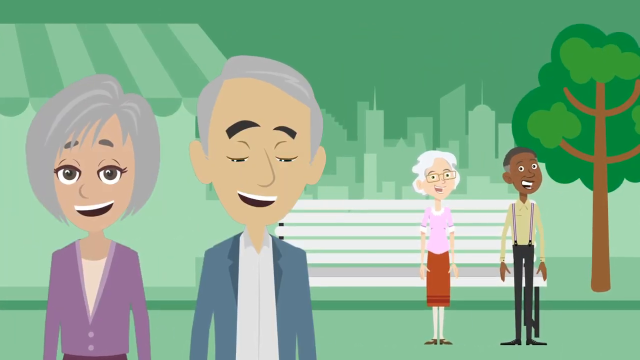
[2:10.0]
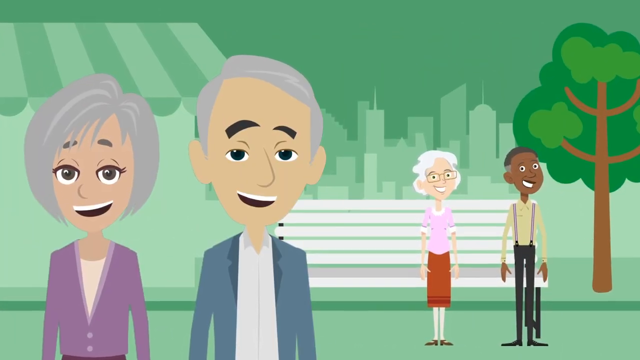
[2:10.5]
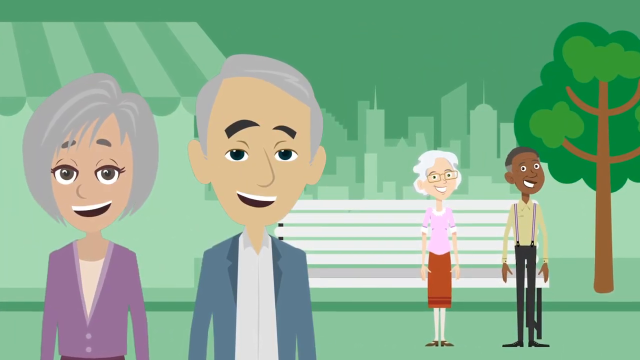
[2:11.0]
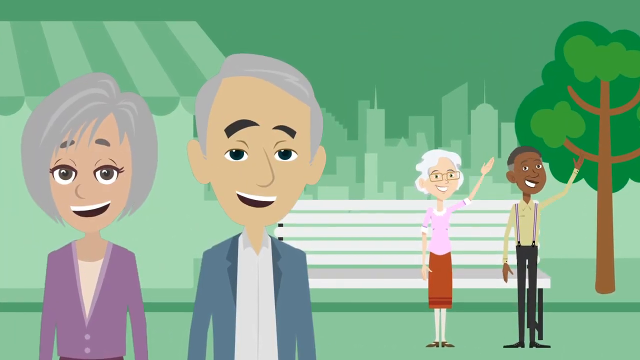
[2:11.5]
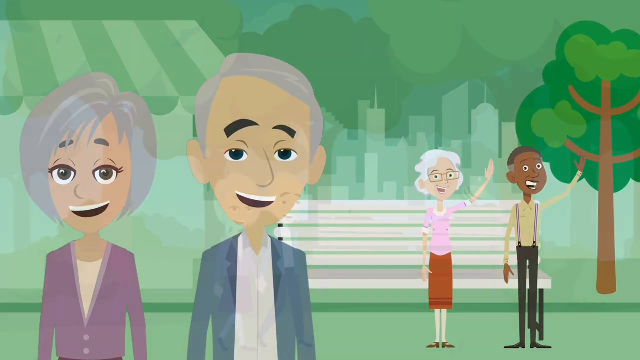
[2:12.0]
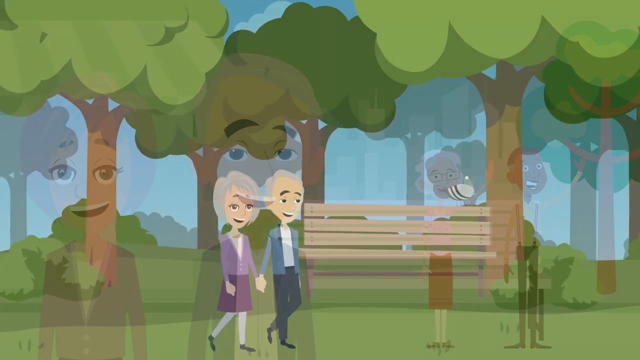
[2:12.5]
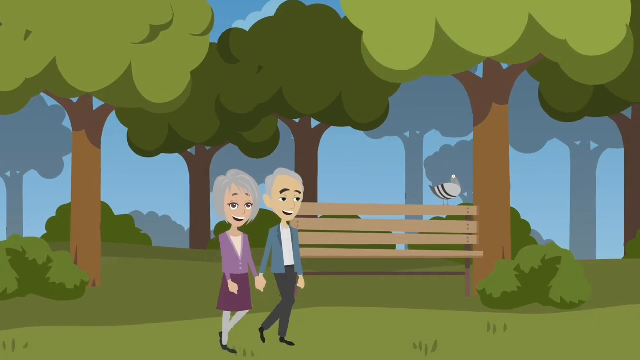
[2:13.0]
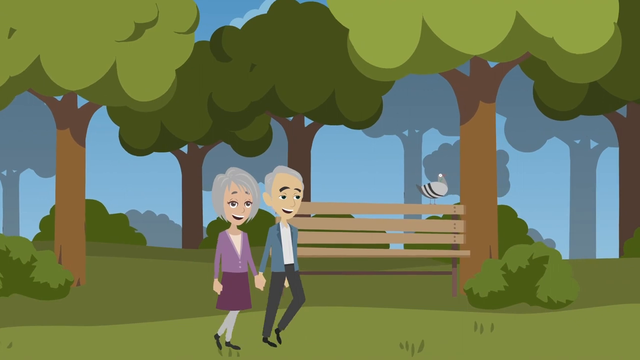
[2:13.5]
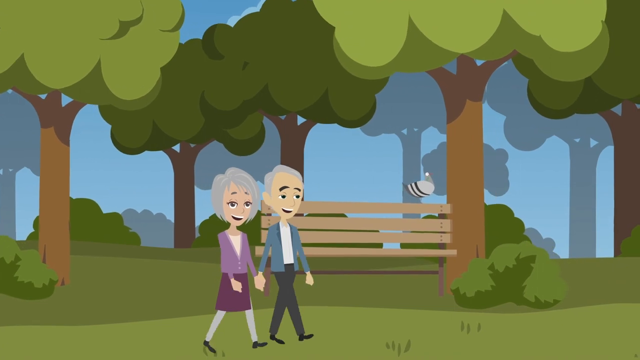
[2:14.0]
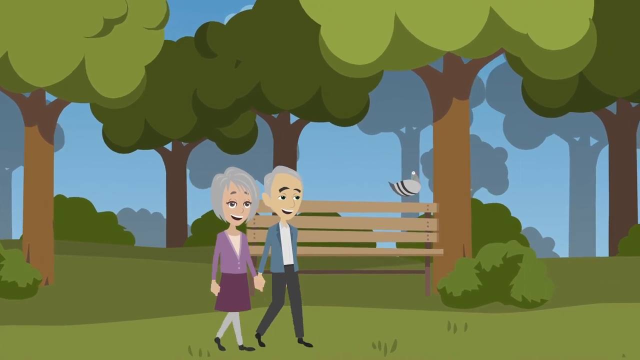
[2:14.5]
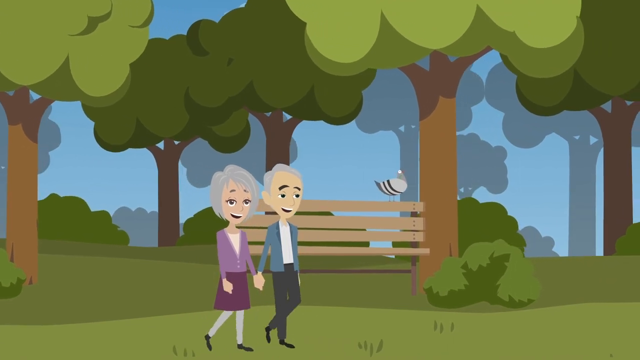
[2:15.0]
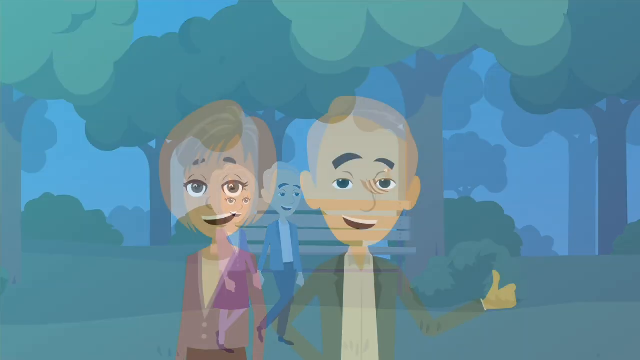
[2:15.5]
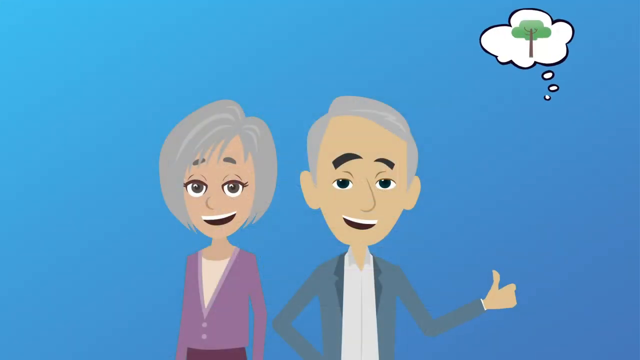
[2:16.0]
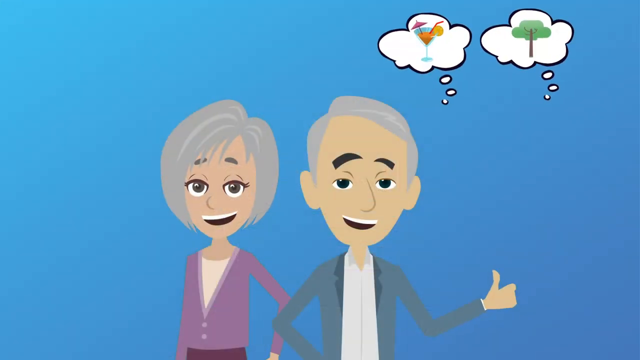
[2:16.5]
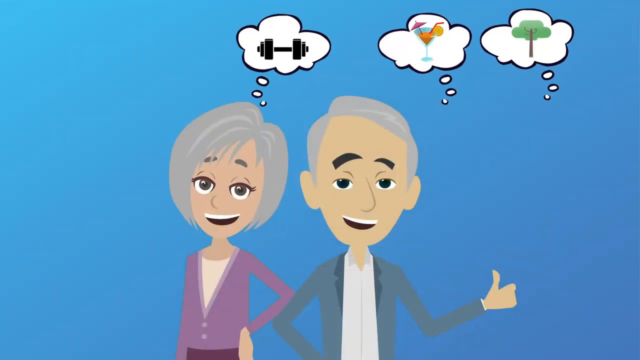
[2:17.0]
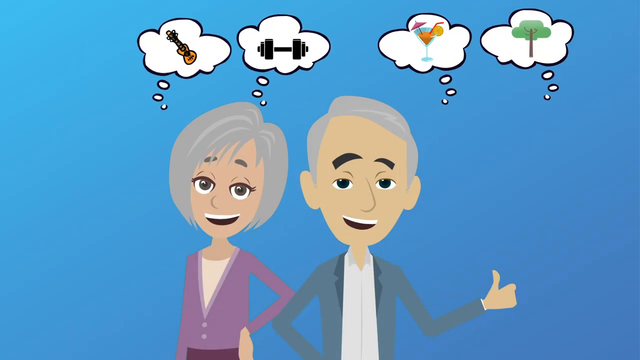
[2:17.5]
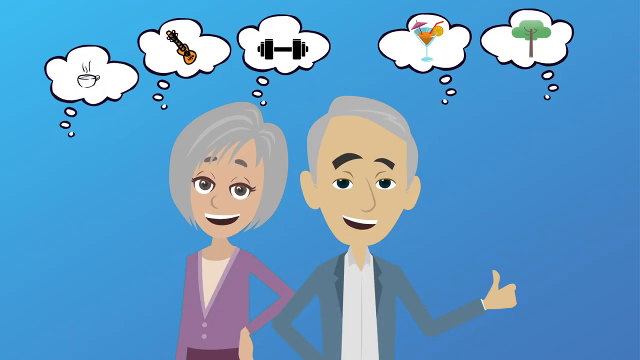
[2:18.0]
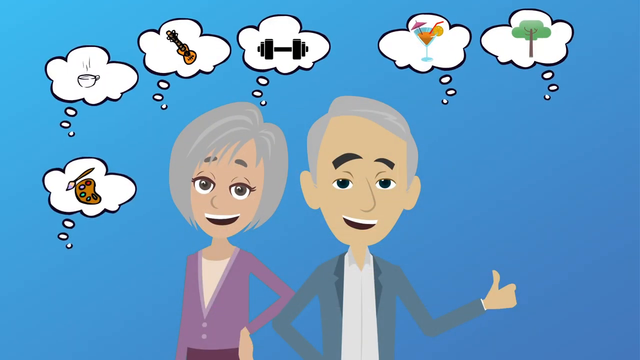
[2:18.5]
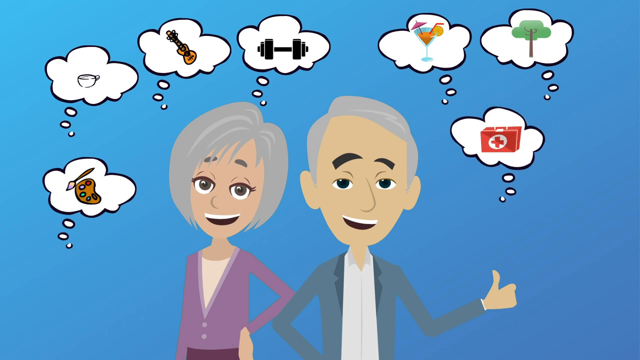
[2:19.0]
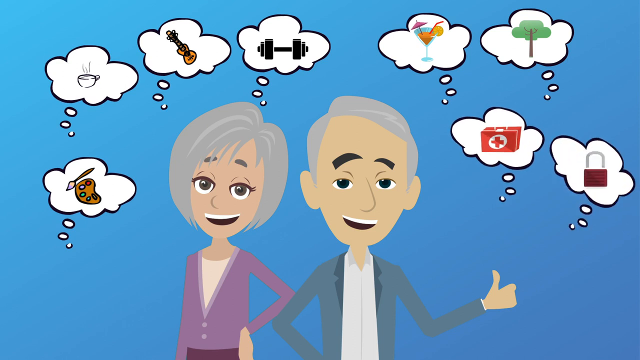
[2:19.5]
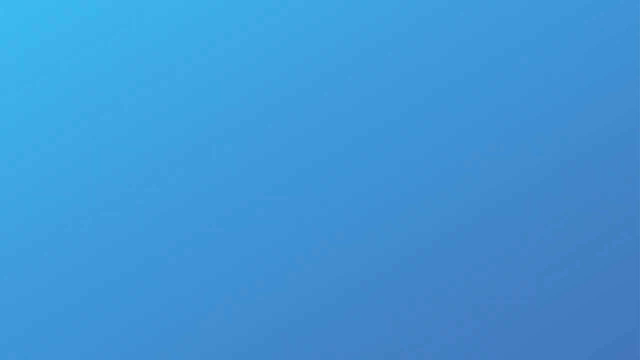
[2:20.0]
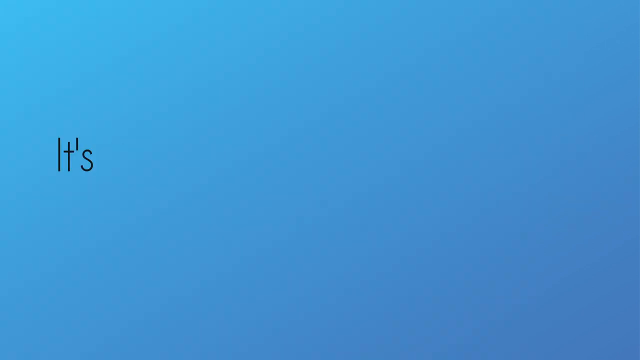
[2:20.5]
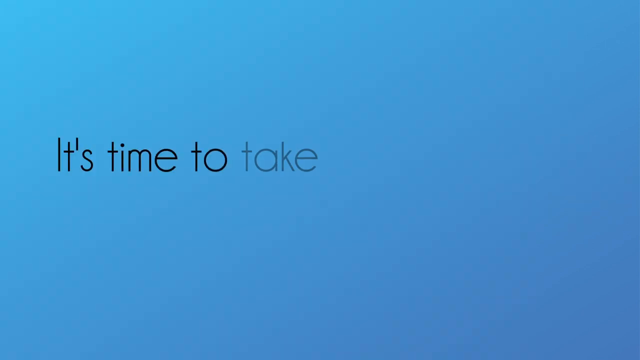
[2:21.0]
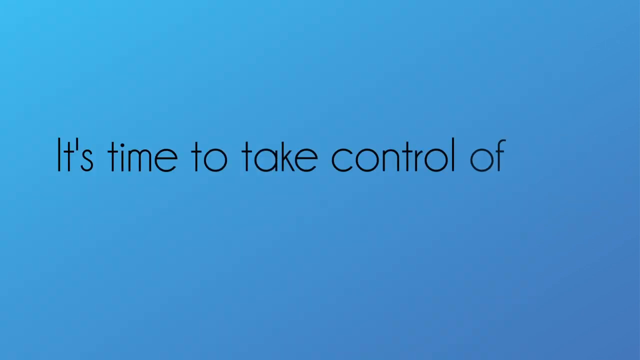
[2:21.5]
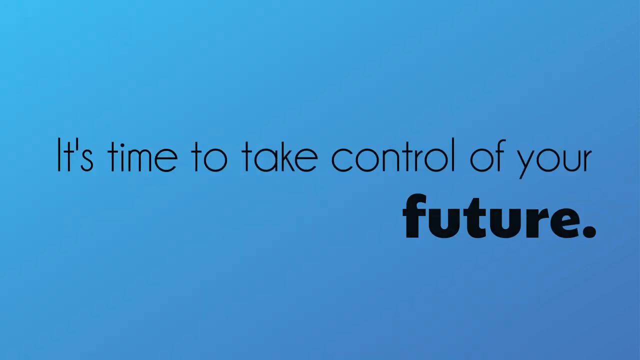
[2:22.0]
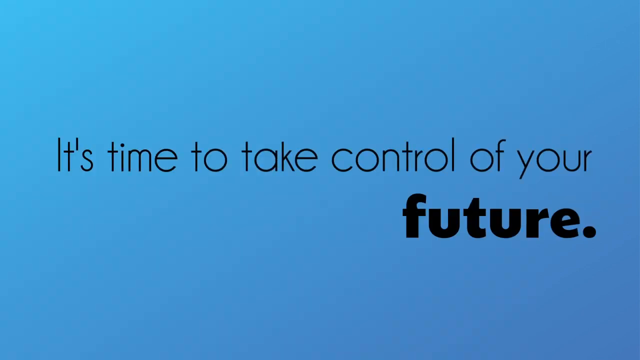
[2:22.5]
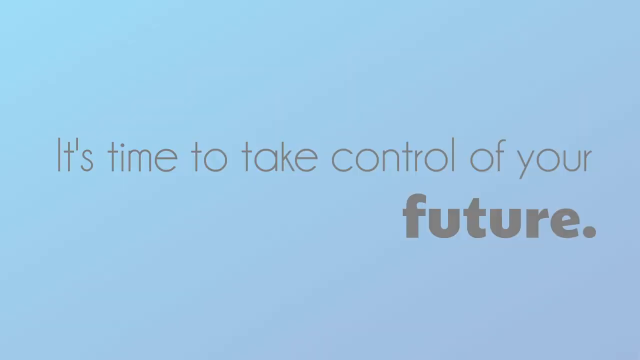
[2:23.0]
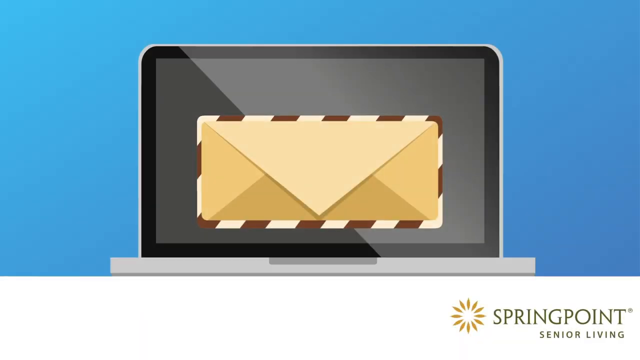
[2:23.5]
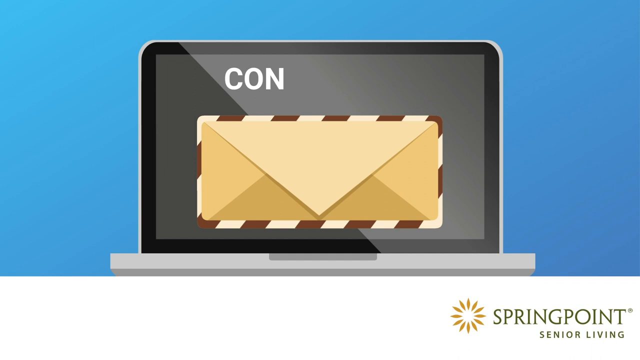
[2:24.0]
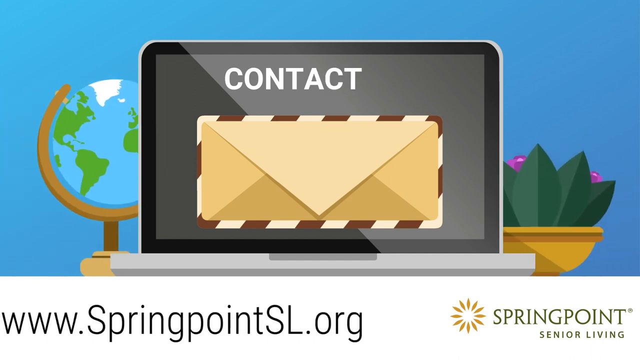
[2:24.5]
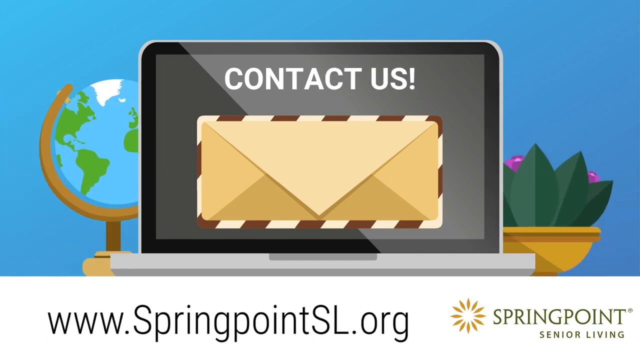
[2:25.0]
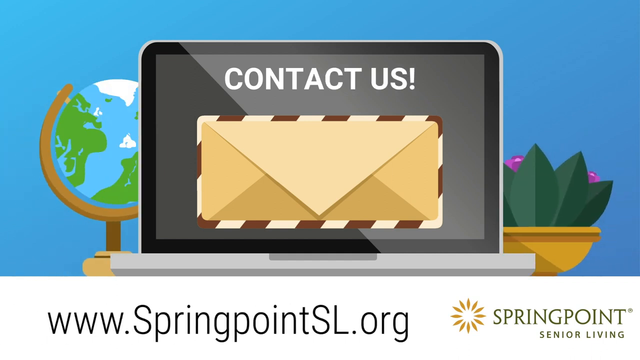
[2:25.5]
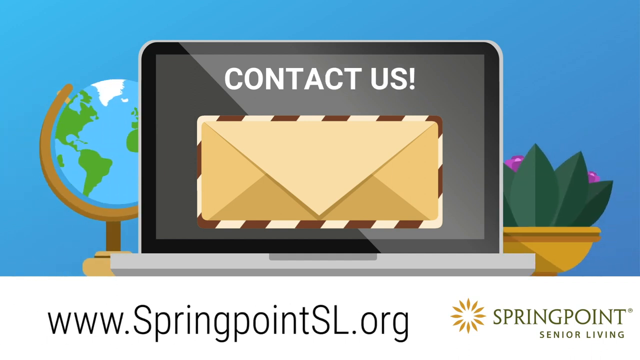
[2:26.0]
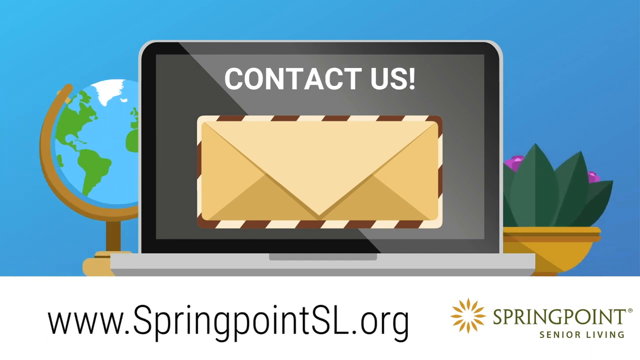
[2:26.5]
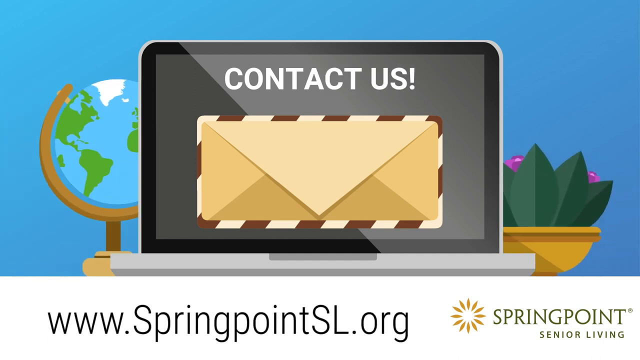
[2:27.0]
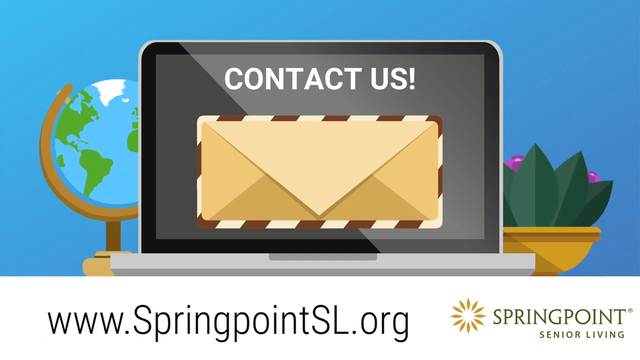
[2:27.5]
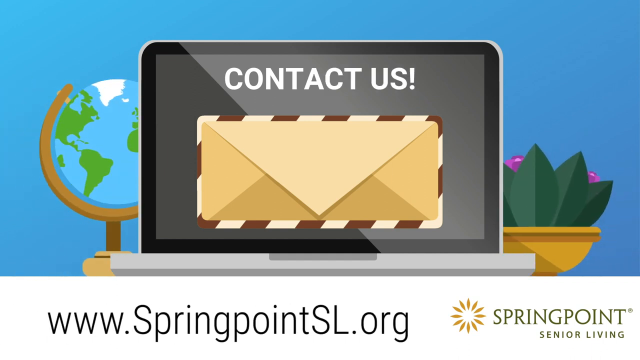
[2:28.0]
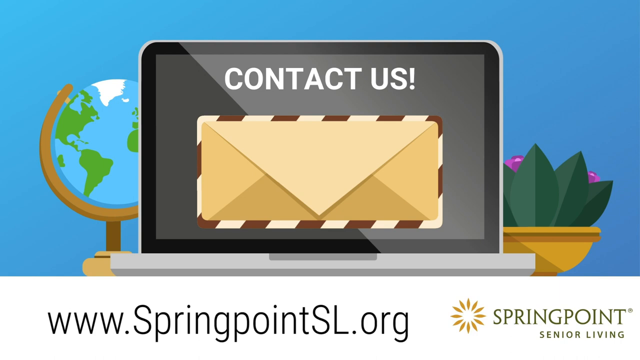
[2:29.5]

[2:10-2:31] The elderly couple walk through a forest scene with trees in the background, a blue sky behind, grass on the ground, some bushes, and a brown wooden bench with a pigeon sitting on top of it. Next, the couple stand against a blue background, the man giving a left thumbs up, surrounded by thought bubbles of different activities: around the woman are an art painting, a coffee cup, a guitar and a dumbbell, and around the man are a cocktail glass, a tree, a first aid box and a padlock. The next screen reads "it's time to take control of your future." Then an image of a laptop appears with "contact us" and a brown envelope on the screen underneath it, the website "www.springpointsl.org" at the bottom, and the organization's logo, "springpoint", in the bottom right of the screen.